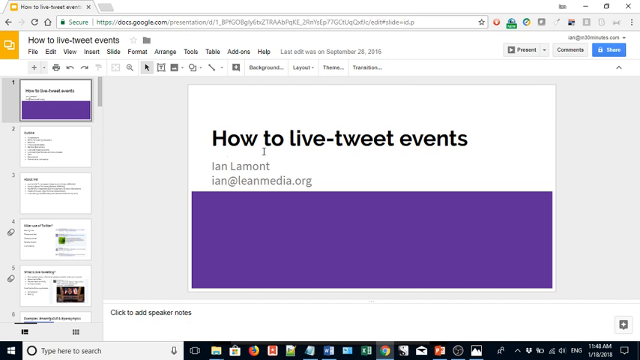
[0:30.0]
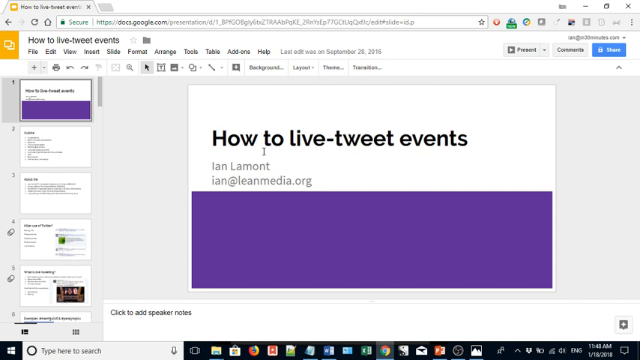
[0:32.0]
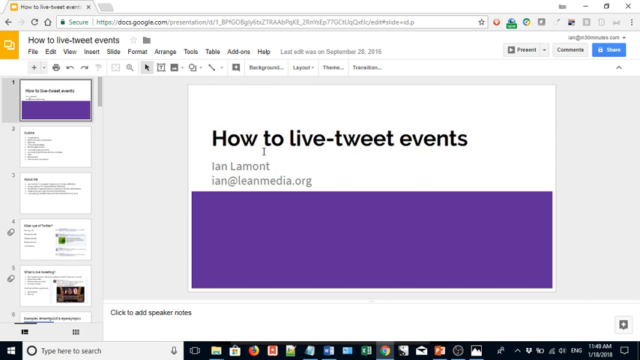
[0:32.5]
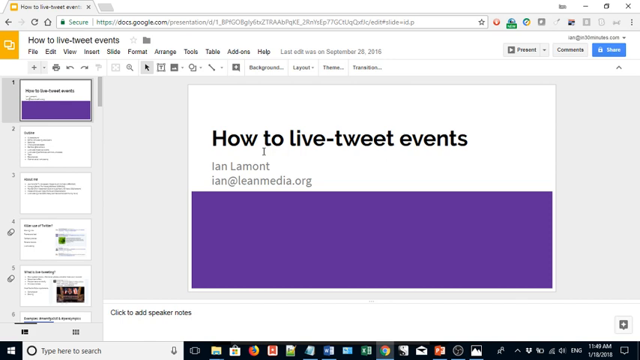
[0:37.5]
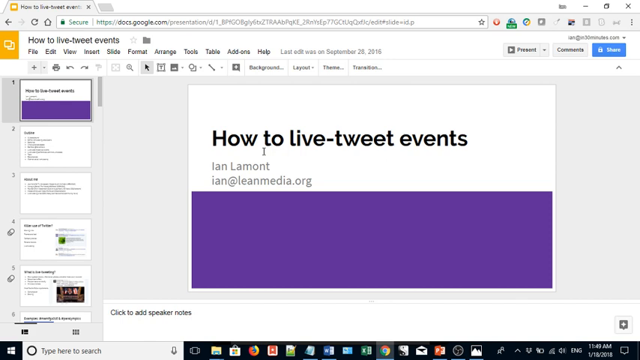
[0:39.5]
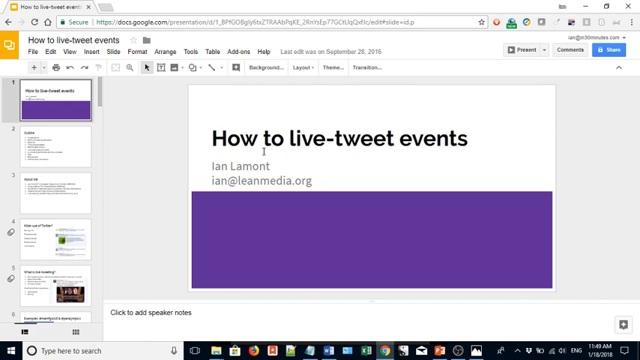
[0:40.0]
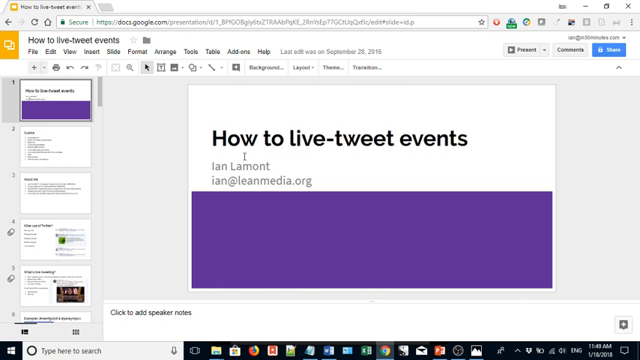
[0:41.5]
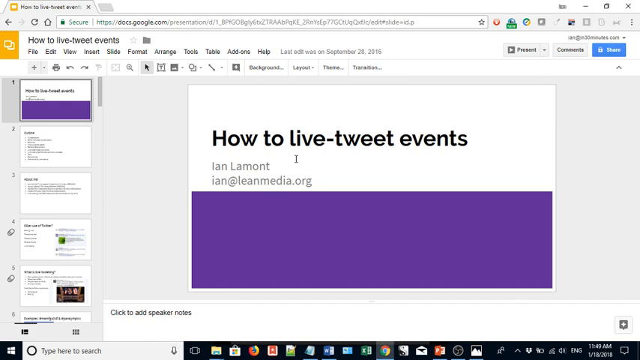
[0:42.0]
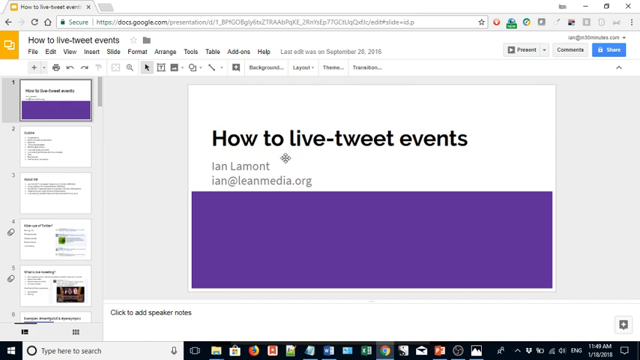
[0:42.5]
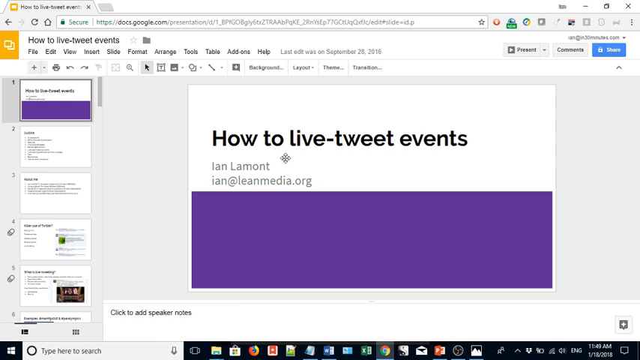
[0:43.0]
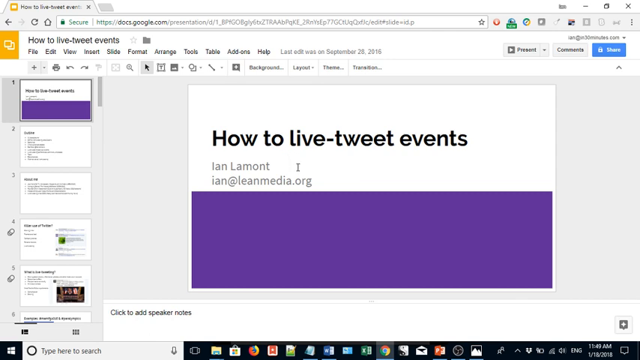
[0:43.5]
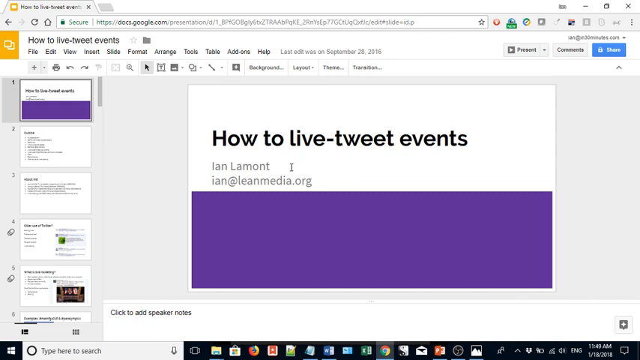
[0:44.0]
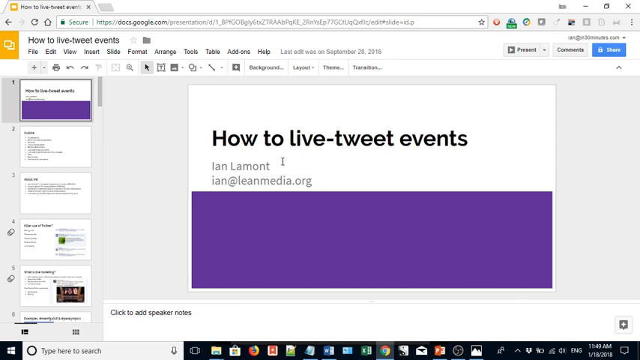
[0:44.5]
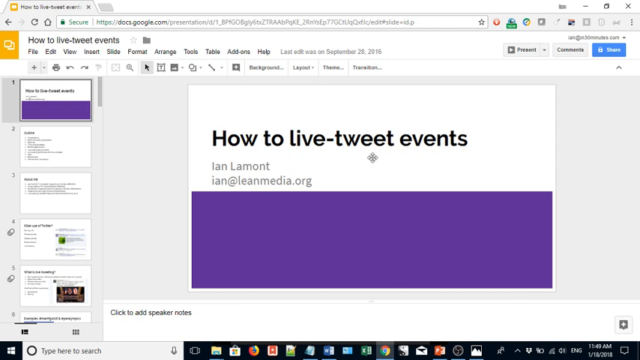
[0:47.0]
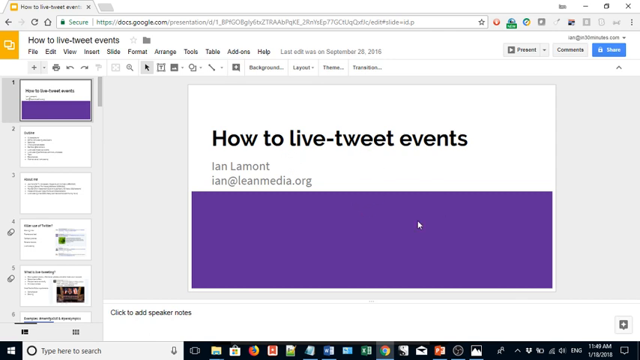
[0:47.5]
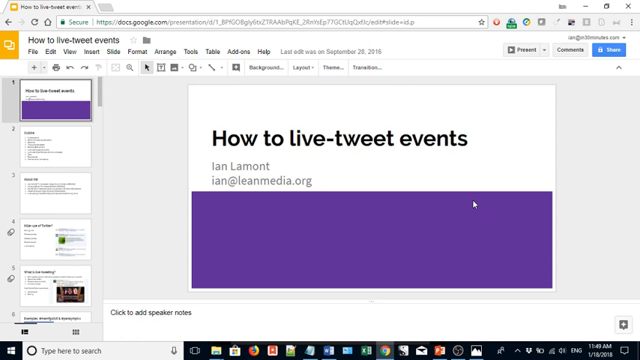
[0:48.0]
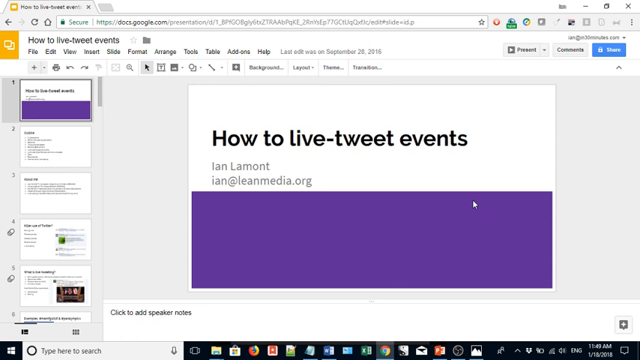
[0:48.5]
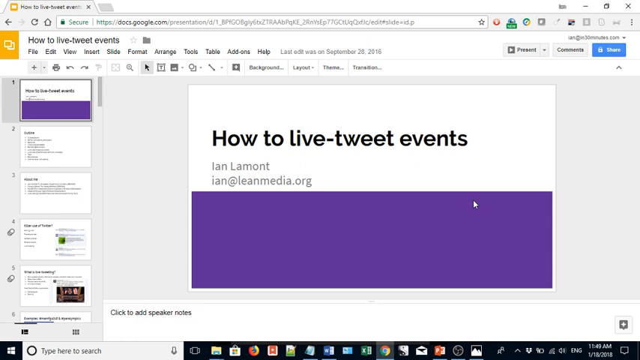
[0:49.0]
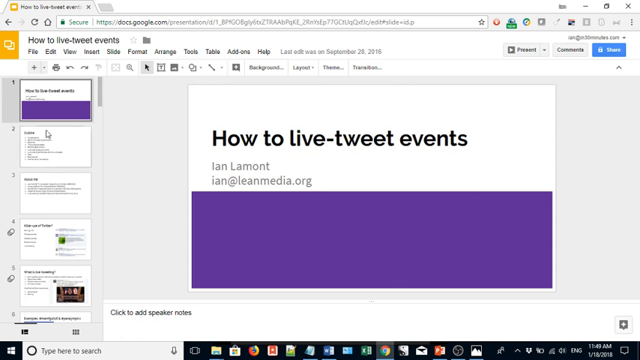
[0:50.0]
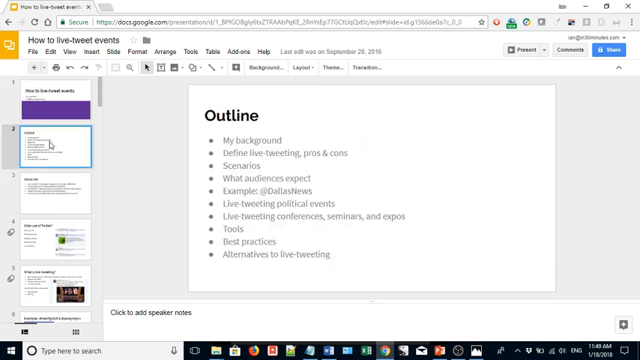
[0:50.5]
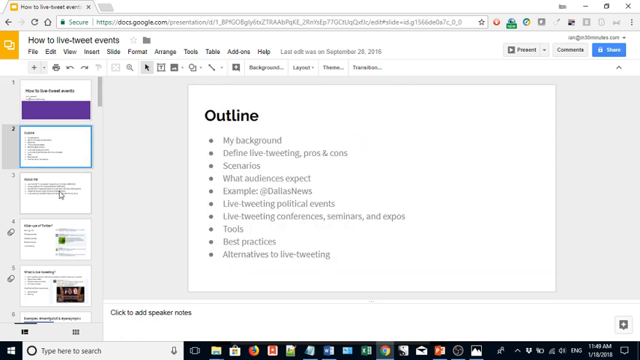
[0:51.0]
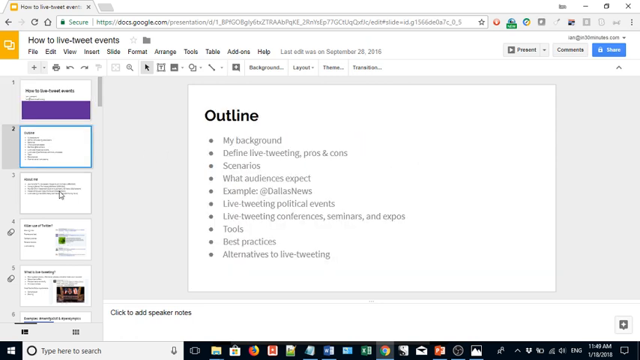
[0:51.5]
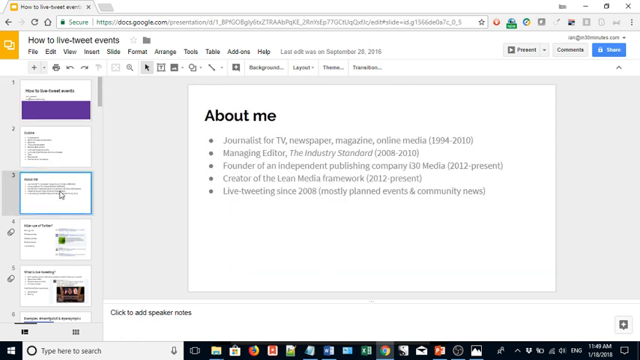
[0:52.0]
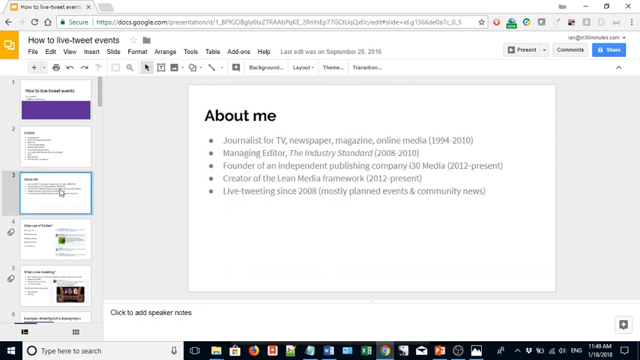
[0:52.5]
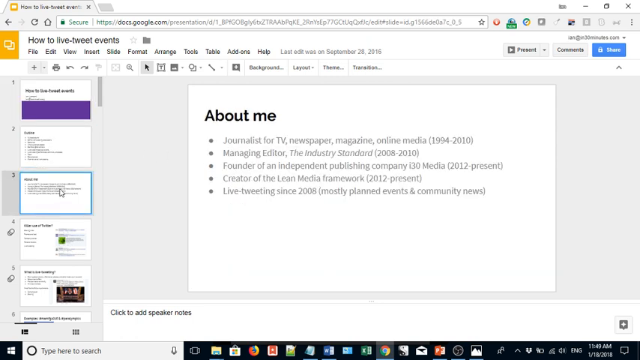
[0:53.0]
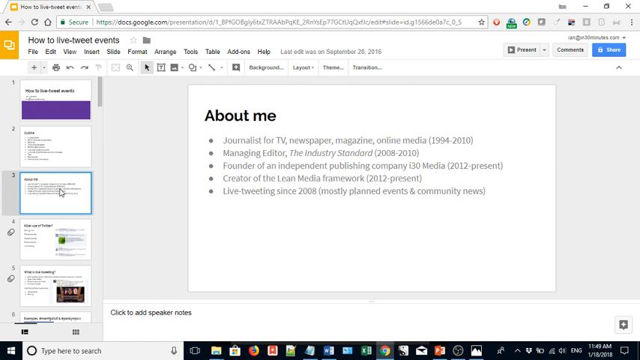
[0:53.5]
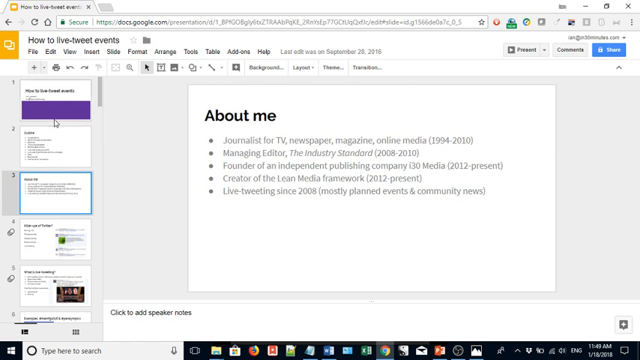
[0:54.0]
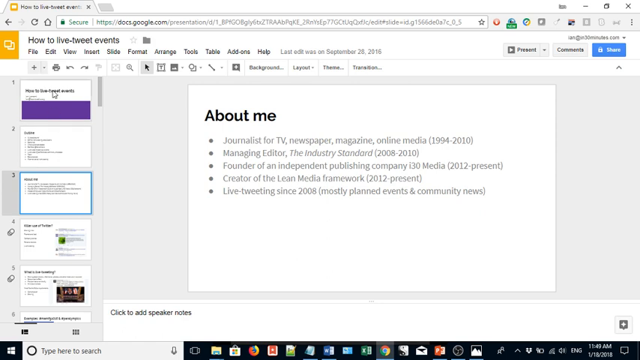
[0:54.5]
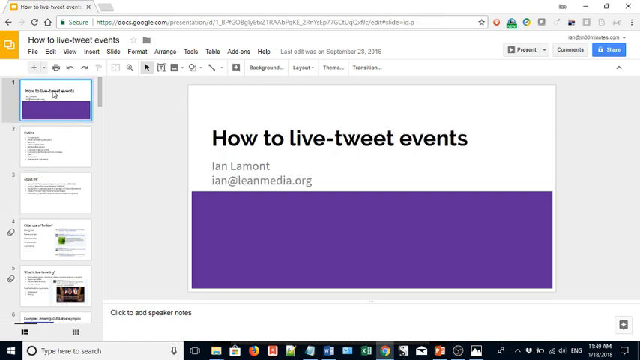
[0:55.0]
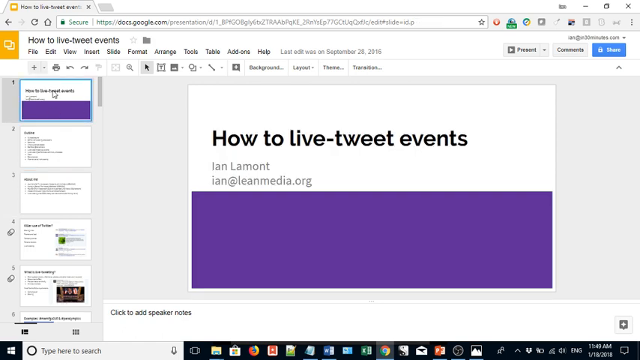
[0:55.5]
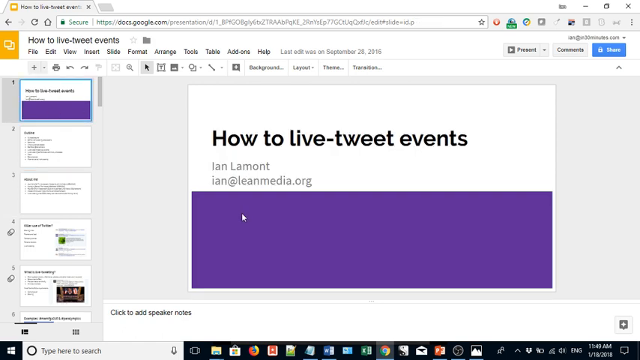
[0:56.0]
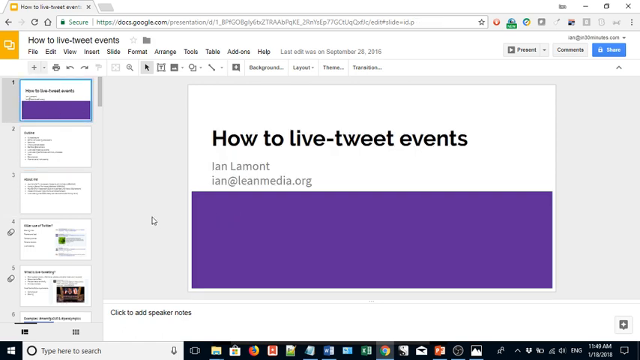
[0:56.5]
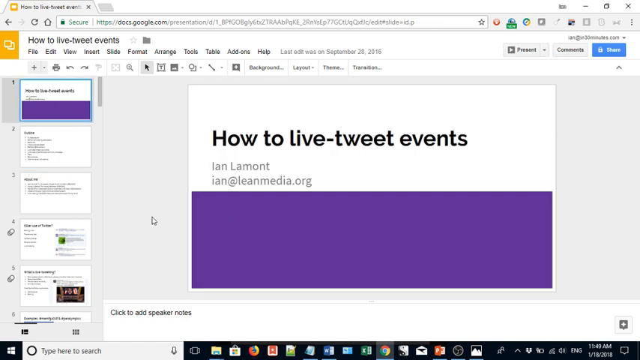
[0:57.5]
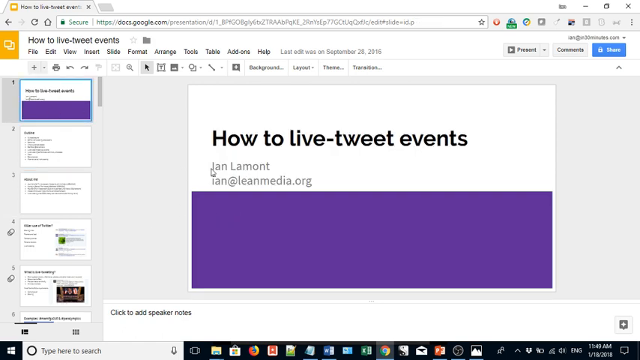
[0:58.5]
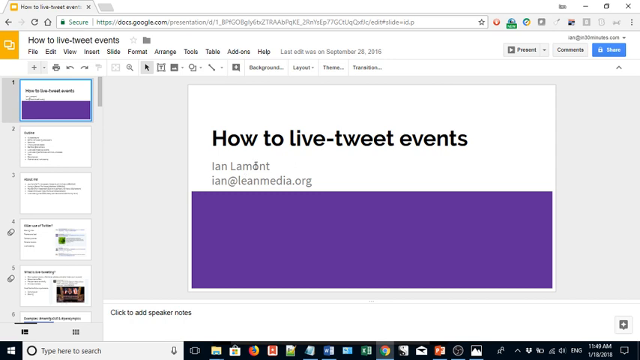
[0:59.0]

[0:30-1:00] A browser is open to a Google Docs presentation titled "How to Live-Tweet Events" at the top left of the screen. A panel on the left shows smaller thumbnail previews of all the slides, and the selected slide appears in full to its right. Slide 1 is selected: it has a white background, a large purple rectangular box covering the bottom half of the slide, and toward the top left black text reading "how to live-tweet events," with "Ian Lamont" in smaller black letters below it and the email address "ian@leanmedia.org" beneath that. The user clicks the second slide in the preview panel, and the slide on the right changes to one with a white background and a black heading on the left reading "Outline." Below it is a bulleted list: "my background," "Define live tweeting pros and cons," "Scenarios," "What audiences expect," "Example: # Dallas News," "Live tweeting political events," "Live tweeting conferences, seminars, and expos," "Tools," "Best practices," and "alternatives to live-tweeting." The user then clicks the third slide, titled "About Me" at the top left, which has five bullet points, including "Journalists for TV, Newspaper, Magazine, Online Media, 1994 through 2010," "Managing Editor, The Industry Standard, 2008 through 2010," "Founder of an Independent Publishing Company, i30 Media, 2012 through present," "Creator of the Lean Media Framework, 2012 through present," and a fifth reading "Live Tweeting since 2008, Mostly Planned Events and Community News." The user then goes back to slide one with the heading "how to live-tweet events."